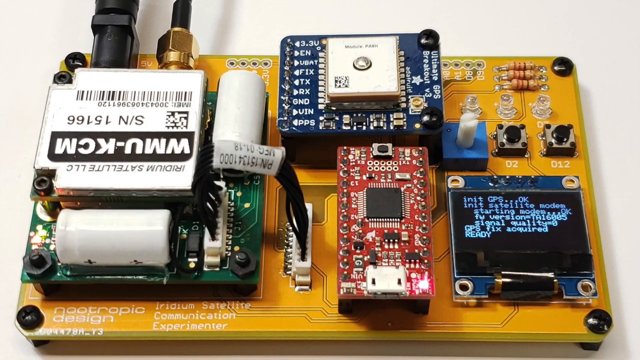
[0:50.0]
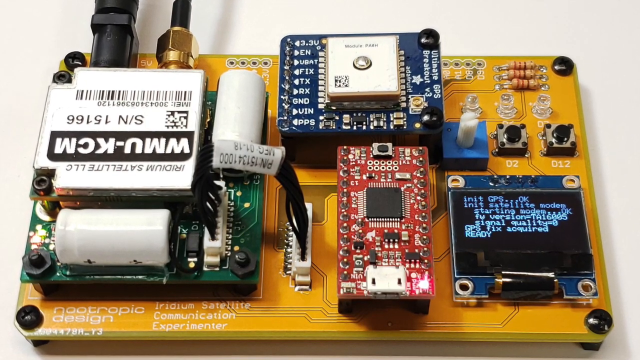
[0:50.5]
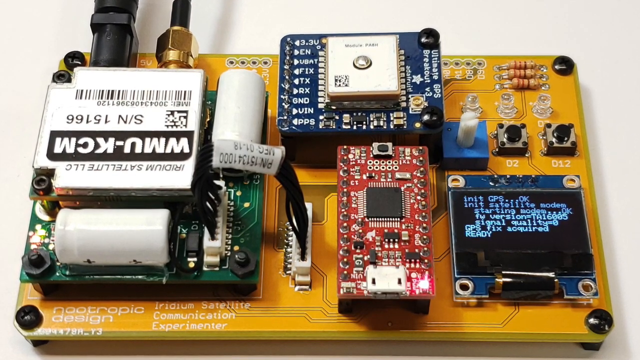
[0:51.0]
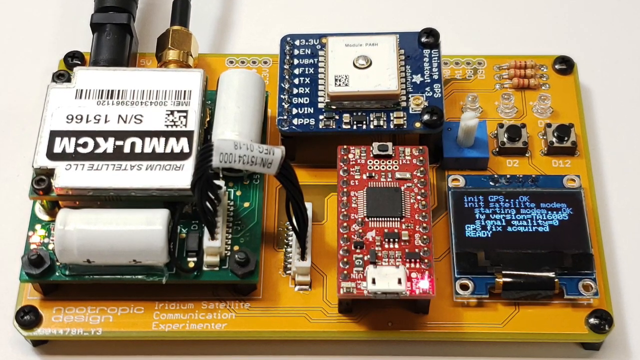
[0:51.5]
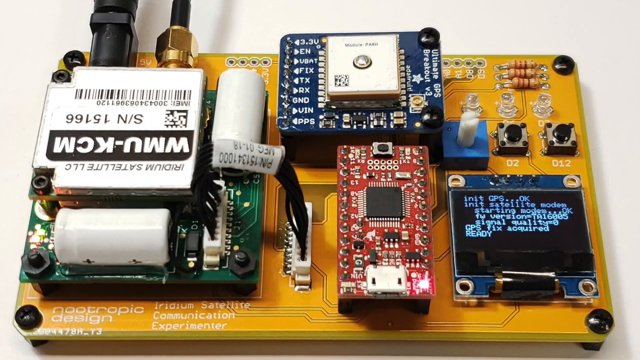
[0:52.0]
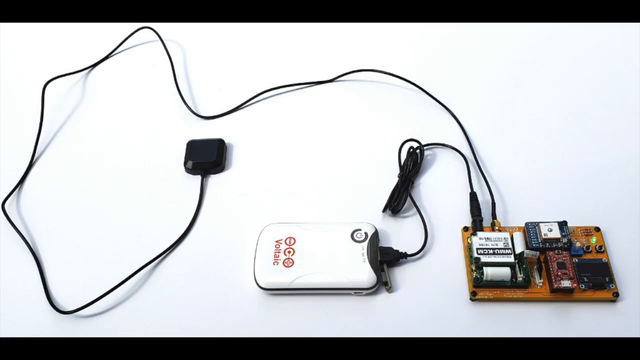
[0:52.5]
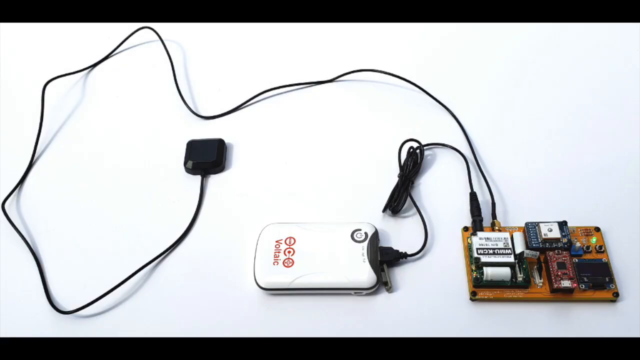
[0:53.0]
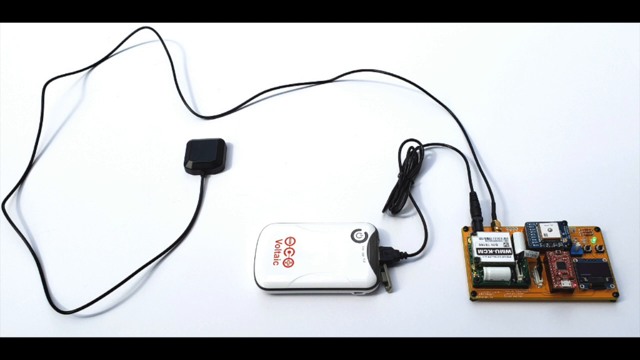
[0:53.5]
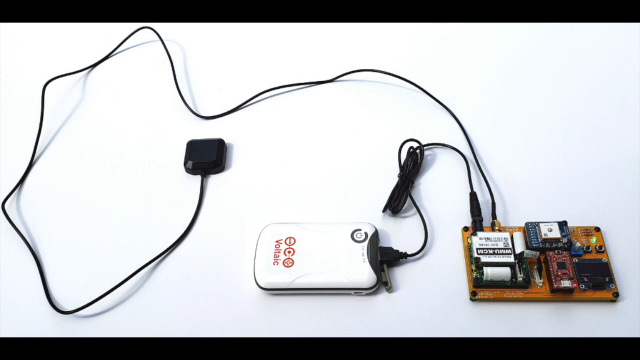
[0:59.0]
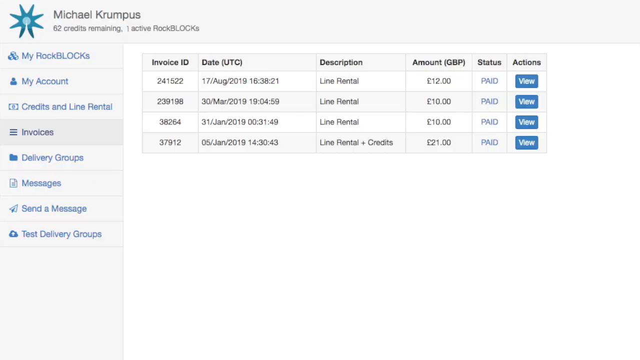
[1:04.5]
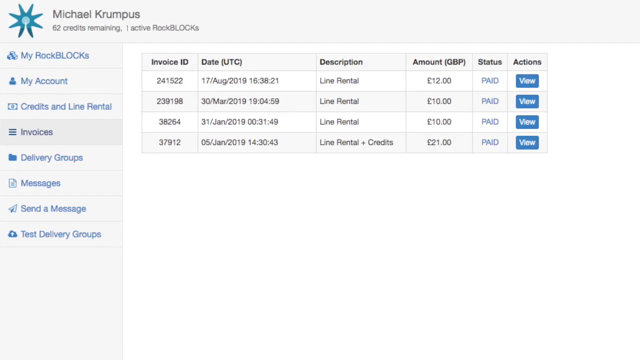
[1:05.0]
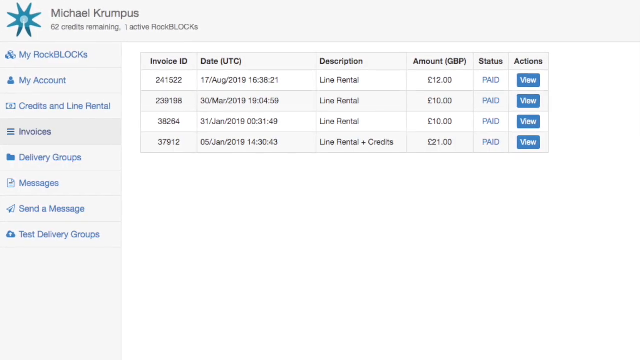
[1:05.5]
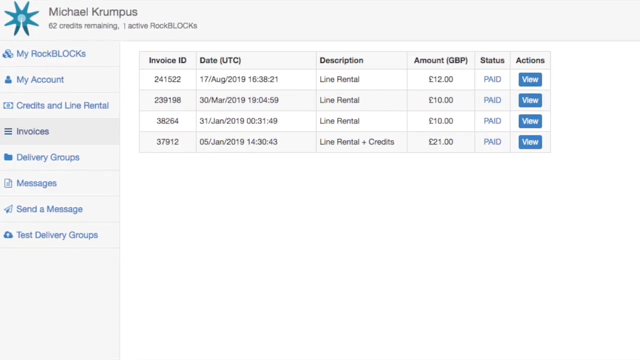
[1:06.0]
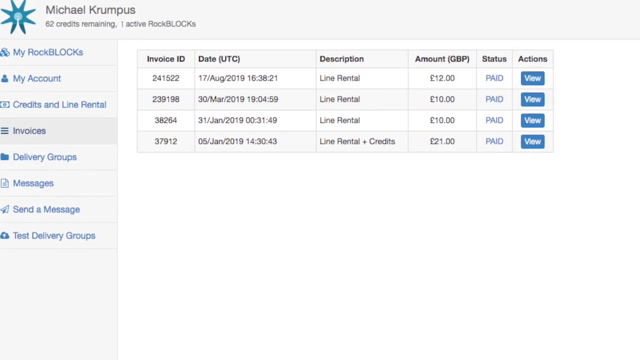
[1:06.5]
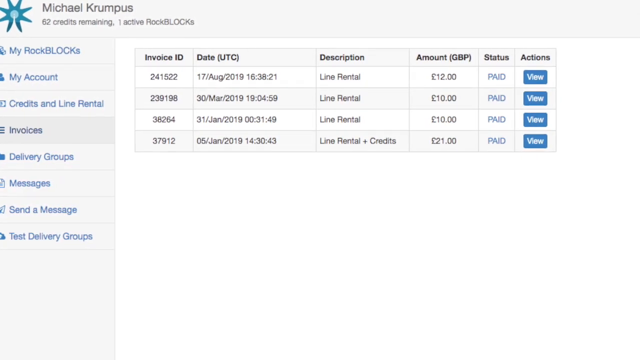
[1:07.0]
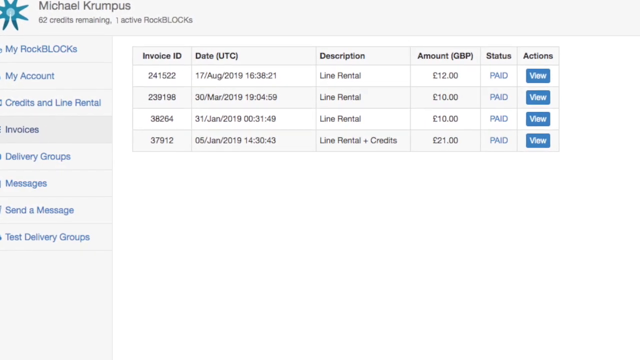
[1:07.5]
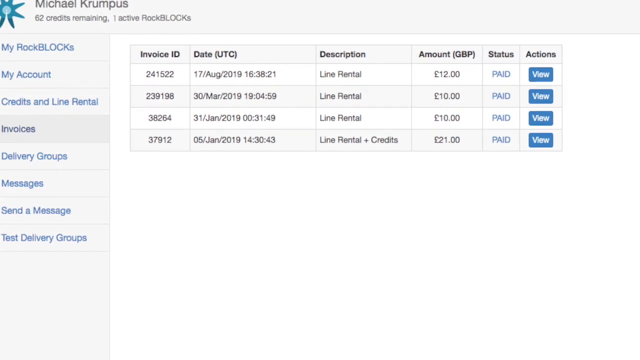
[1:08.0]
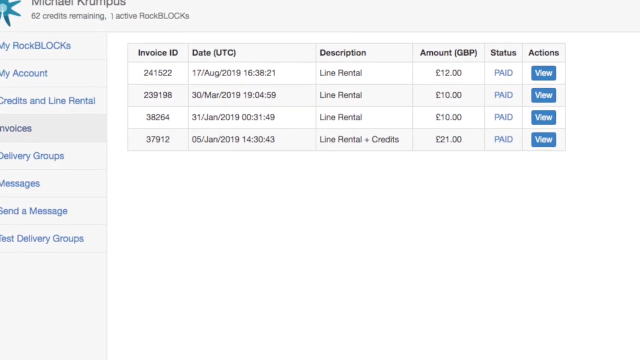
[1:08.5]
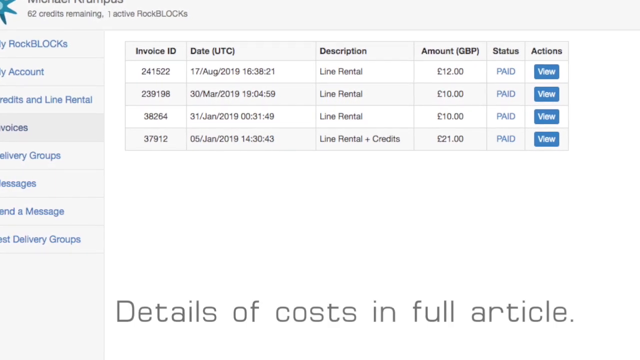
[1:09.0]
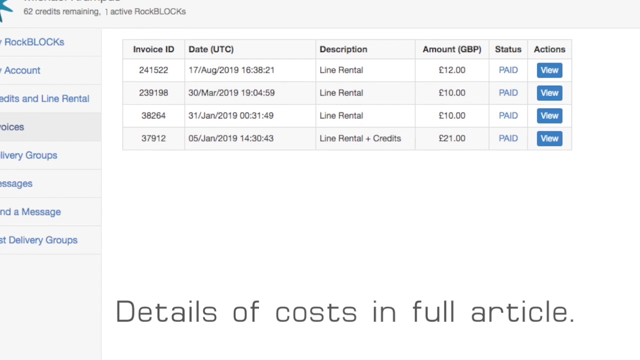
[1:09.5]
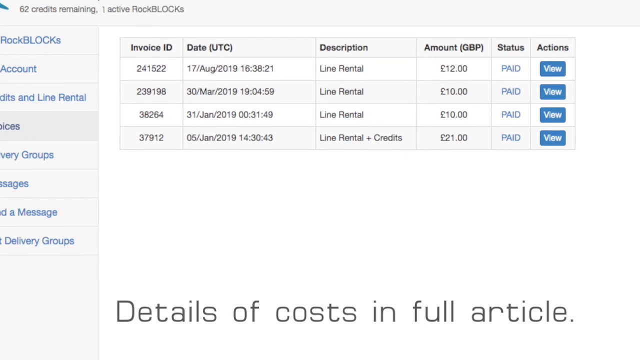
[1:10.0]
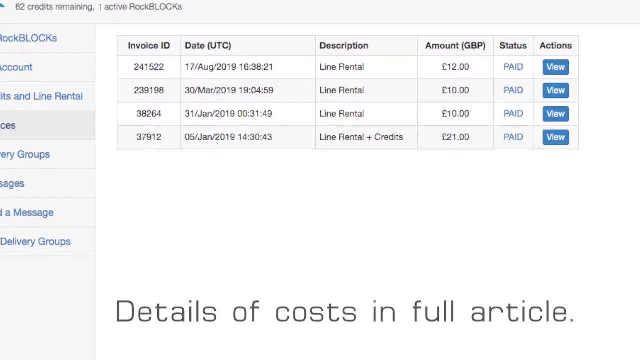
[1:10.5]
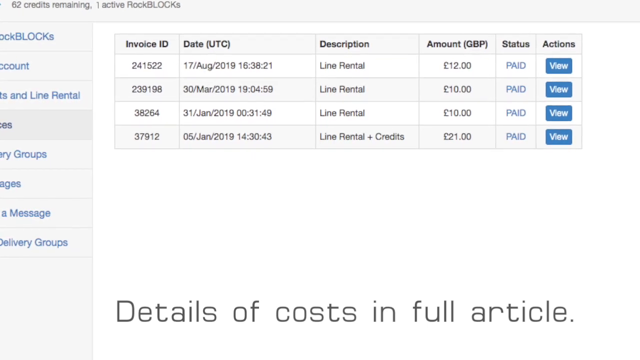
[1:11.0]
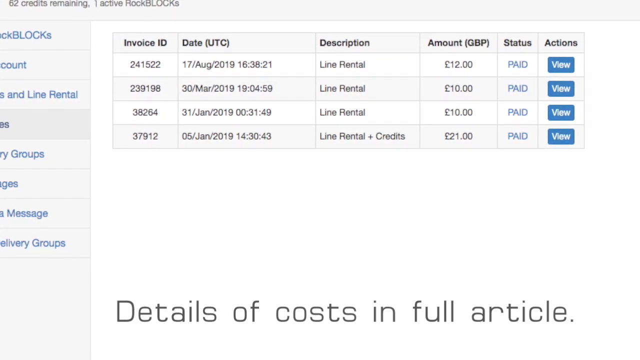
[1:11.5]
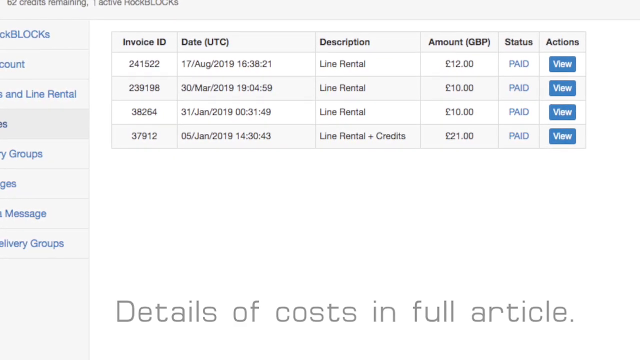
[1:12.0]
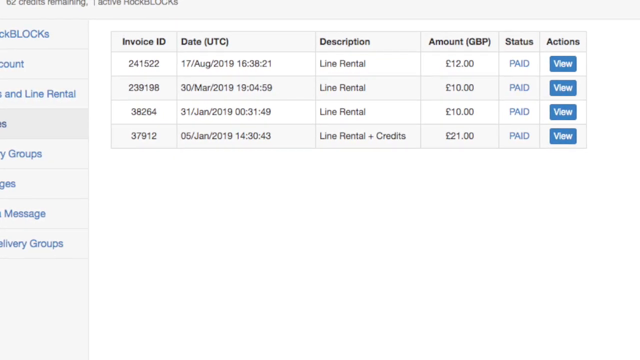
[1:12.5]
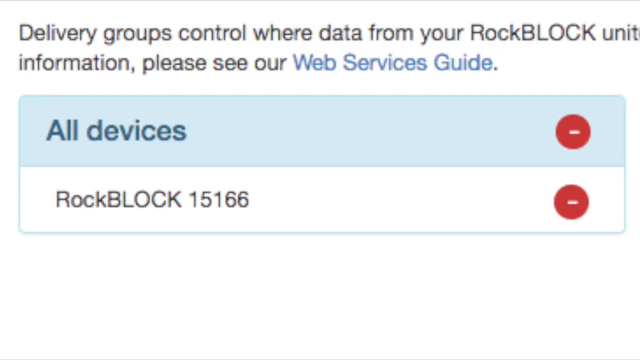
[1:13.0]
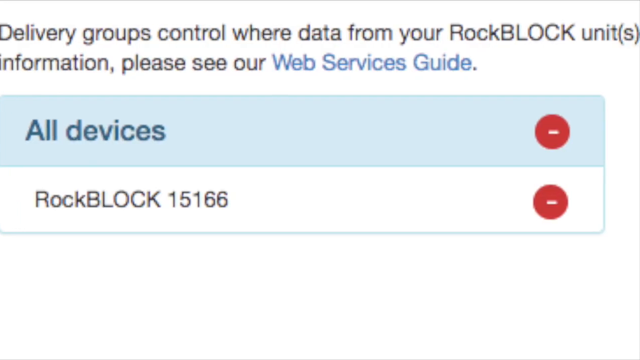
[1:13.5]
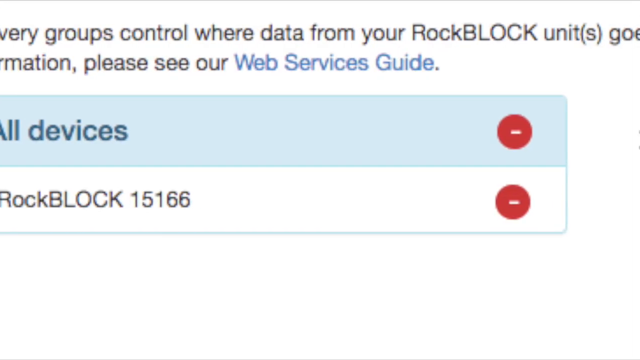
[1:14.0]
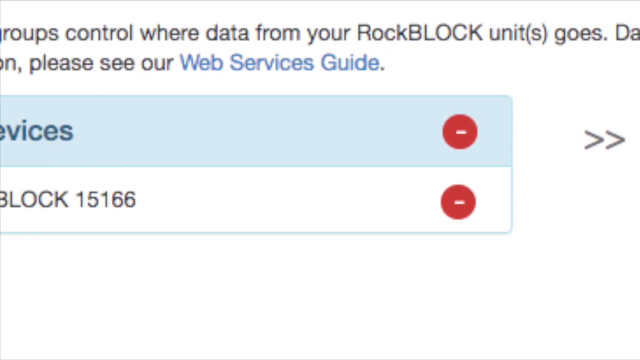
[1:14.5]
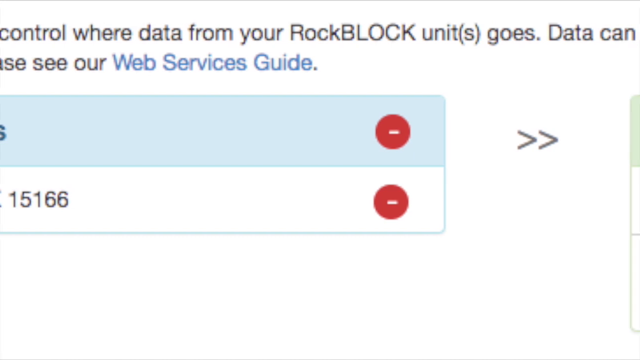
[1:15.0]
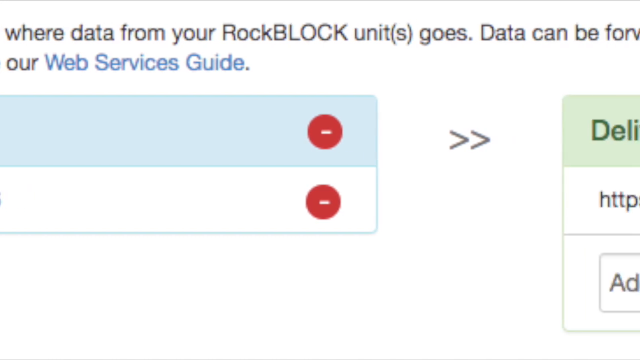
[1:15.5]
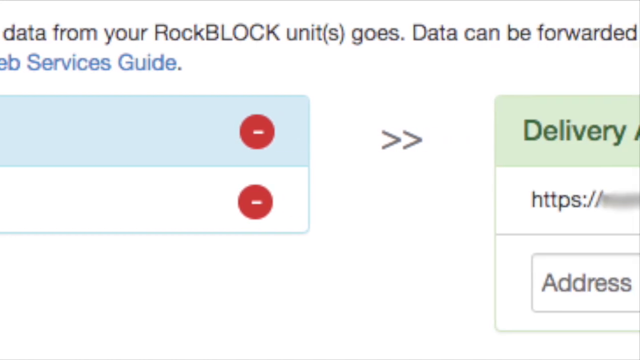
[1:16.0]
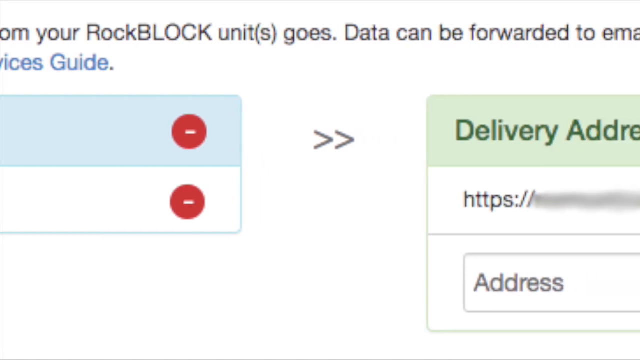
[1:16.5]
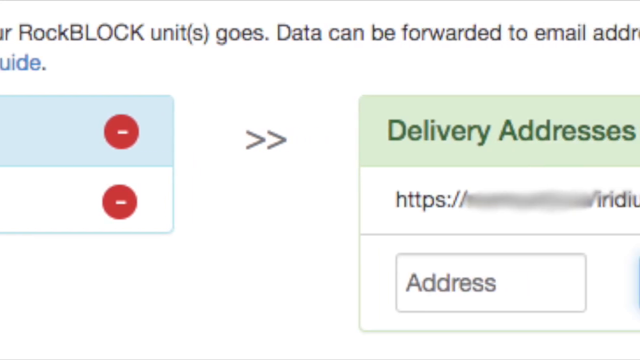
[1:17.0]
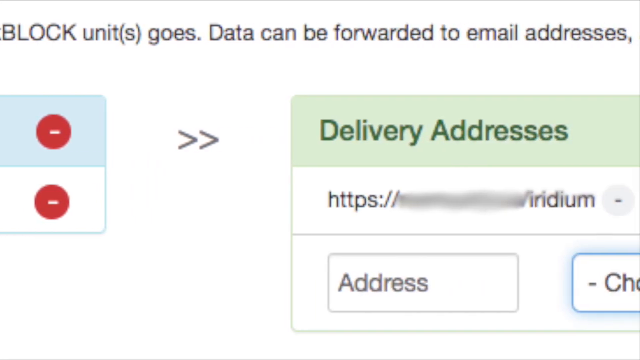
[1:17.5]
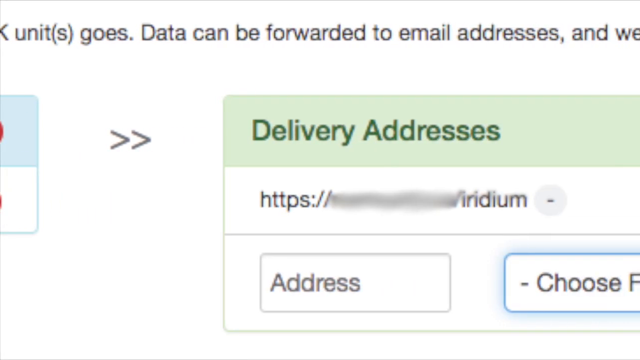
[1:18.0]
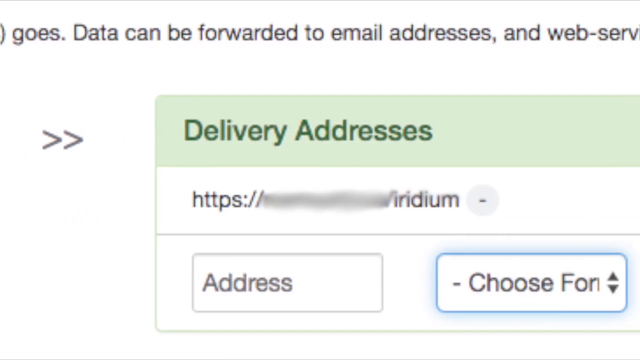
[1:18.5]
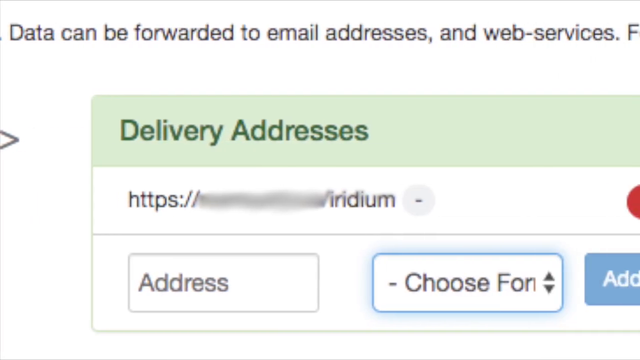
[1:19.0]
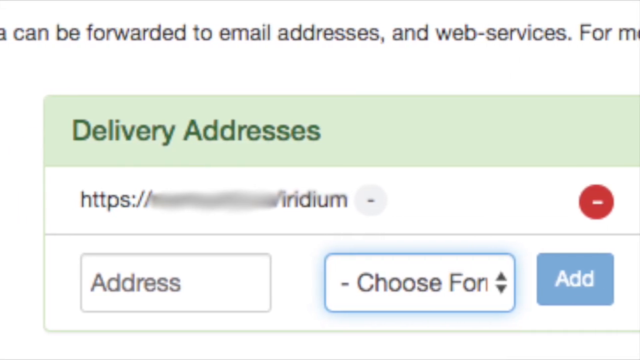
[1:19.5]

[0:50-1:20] The video cuts to a white background with the same component in the bottom right corner. Of the two black wires coming off its top, one comes off the left side of the top, goes up, then curls down and goes down to the left to a square white box with red lettering on its left side, the top of the lettering facing right. The other black cord goes up past the midway point toward the top, goes over to the left, goes up almost to the top again, runs down the left side, back around and back up to a square black box. A shadow is visible under the cord; some of it is raised off the surface and some of it is down on the surface. The video then cuts to a page with a kind of blue sun with eight small blue rays in the top left corner, and "Michael Krumpus" to the right of it. Below that it says "62 credits remaining active rock blocks." Down the left side are nine clickable links, such as account, invoices and messages. To the right is an invoice box with columns, left to right, for invoice ID, date, description, amount, status and actions, with four rows of information below them. Under actions is a blue button that says "view" in white. The camera slowly zooms in toward the invoice, and black text across the bottom reads "details of costs in full article." Next is a white close-up with "Information" across the top, a light blue border reading "all devices" below it, and below that, in a white border, "rock block 15166." On the right side, both of these have a red circle with a white line through it. As the view pans to the right, two greater-than signs lead over to the delivery address.